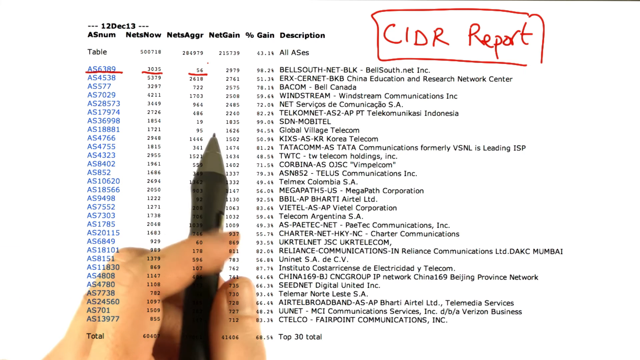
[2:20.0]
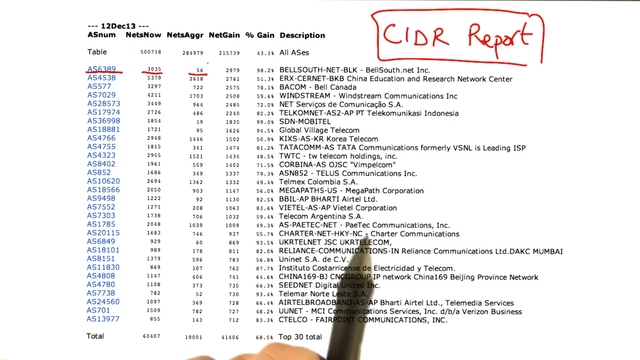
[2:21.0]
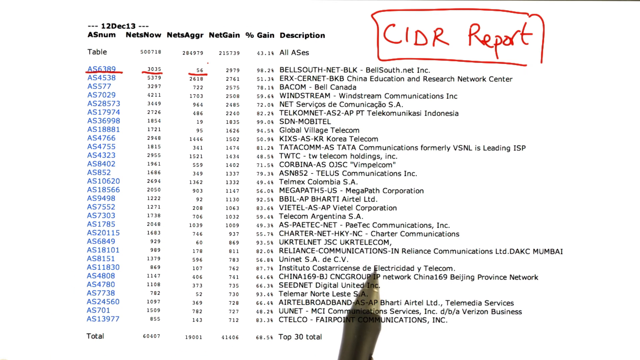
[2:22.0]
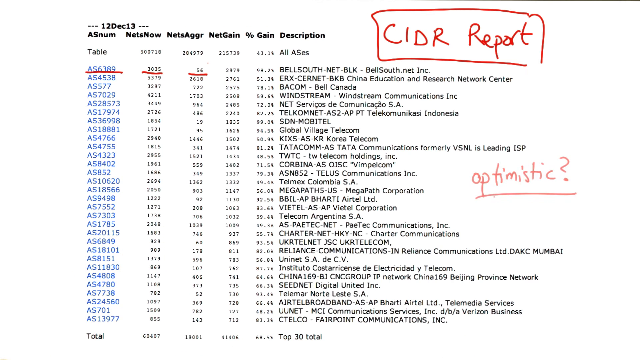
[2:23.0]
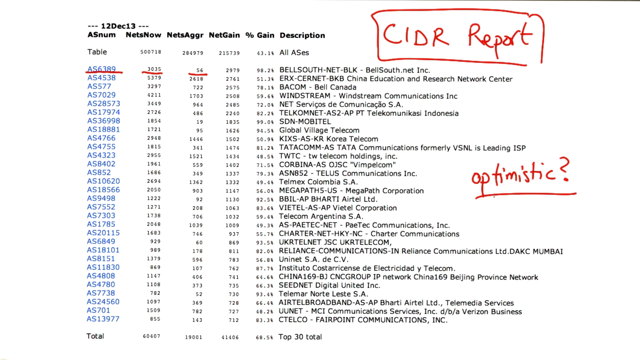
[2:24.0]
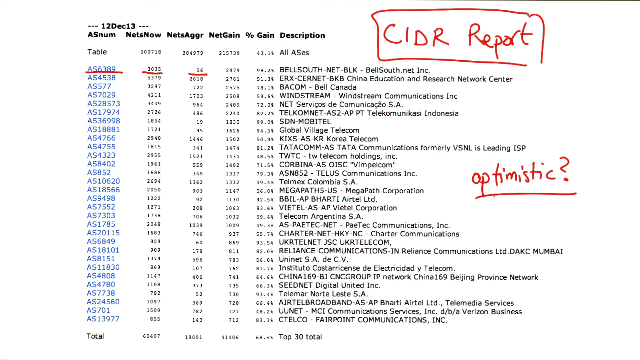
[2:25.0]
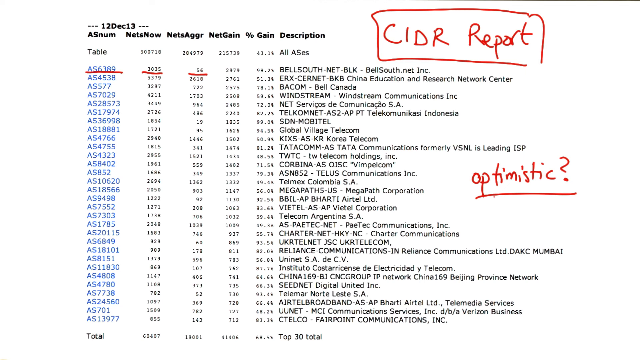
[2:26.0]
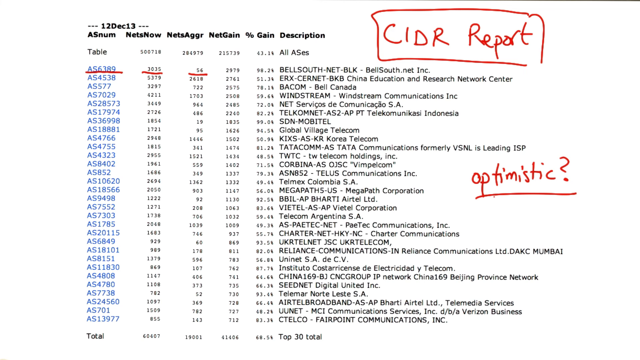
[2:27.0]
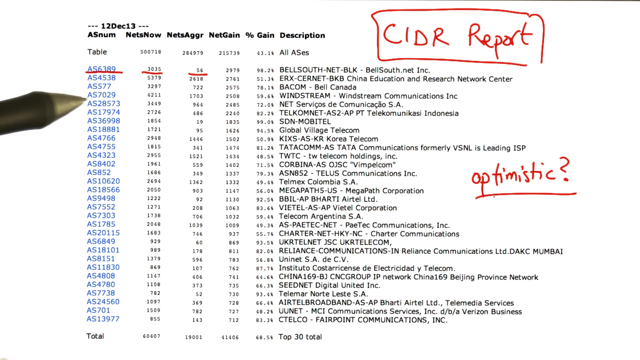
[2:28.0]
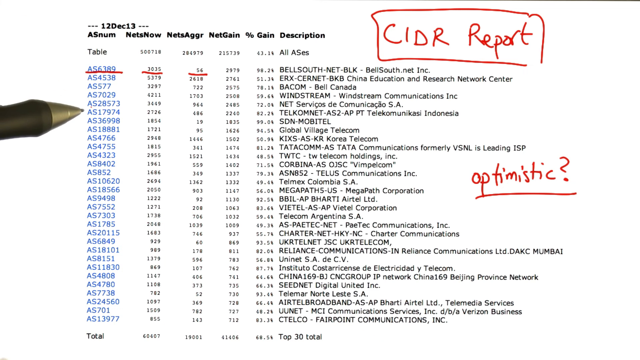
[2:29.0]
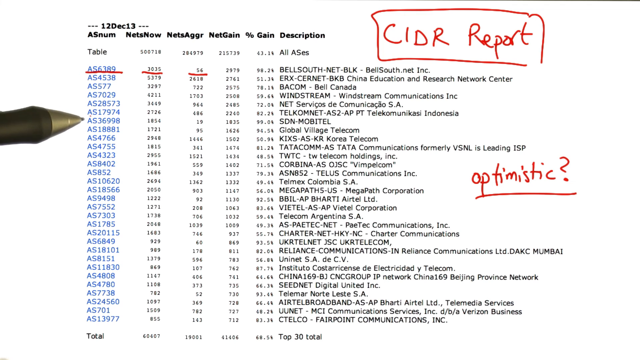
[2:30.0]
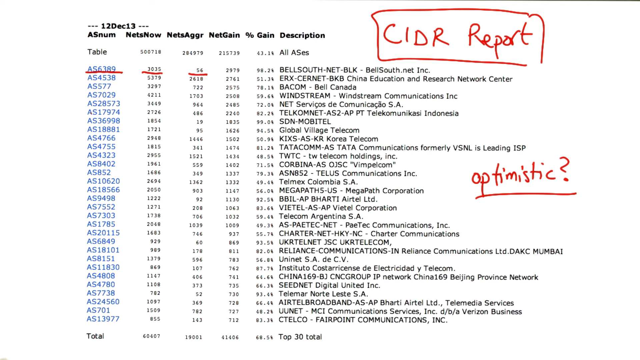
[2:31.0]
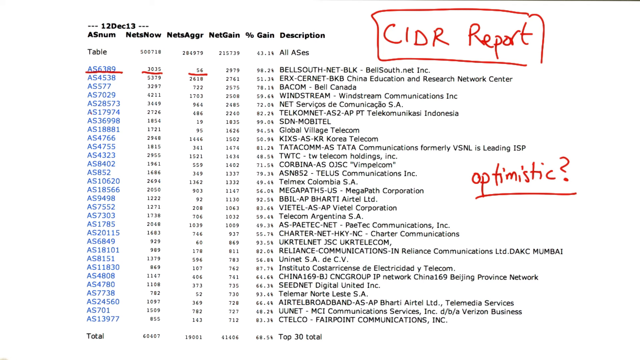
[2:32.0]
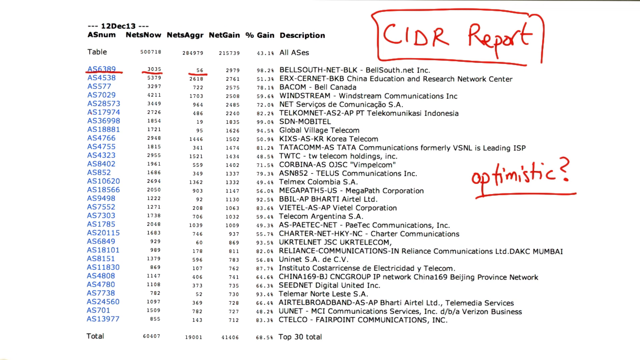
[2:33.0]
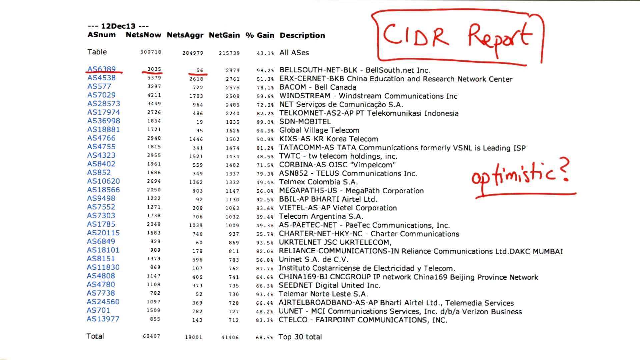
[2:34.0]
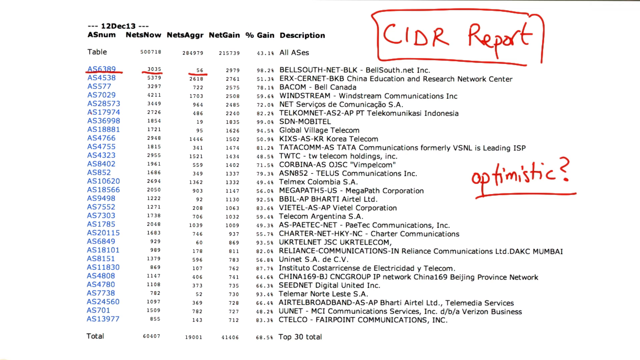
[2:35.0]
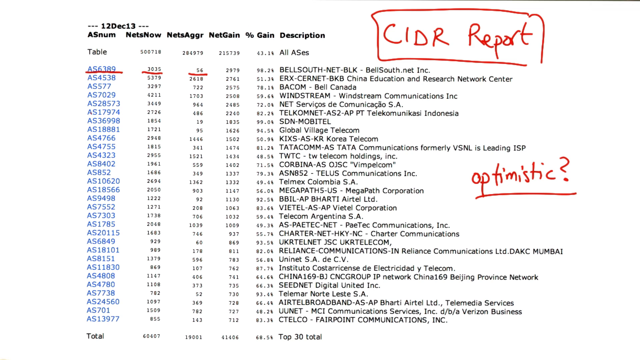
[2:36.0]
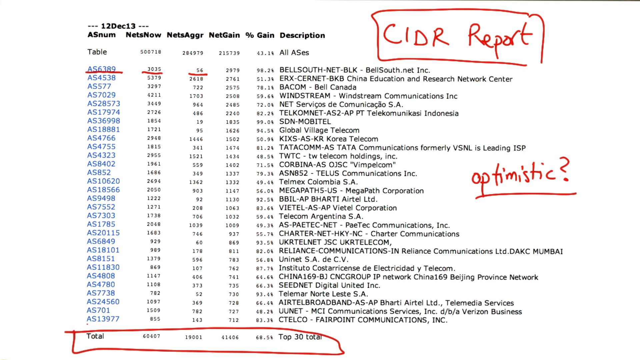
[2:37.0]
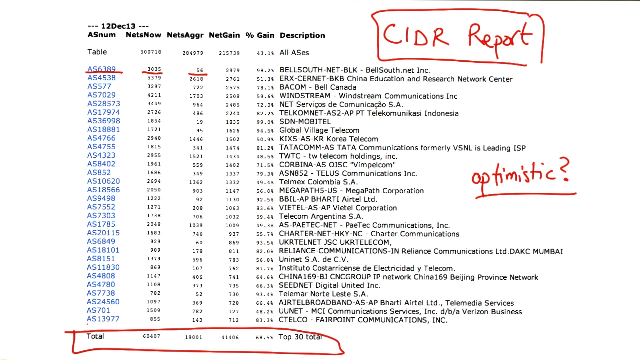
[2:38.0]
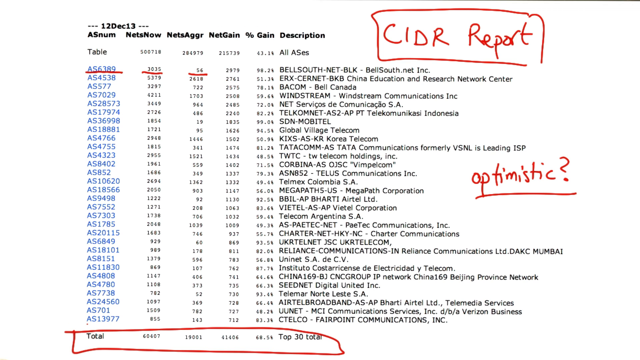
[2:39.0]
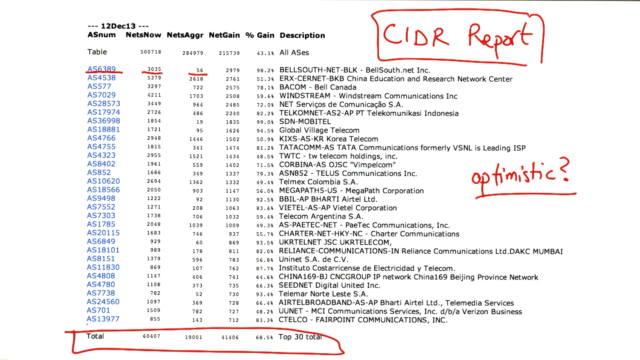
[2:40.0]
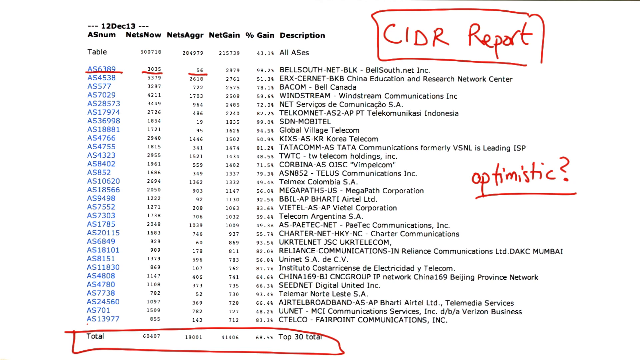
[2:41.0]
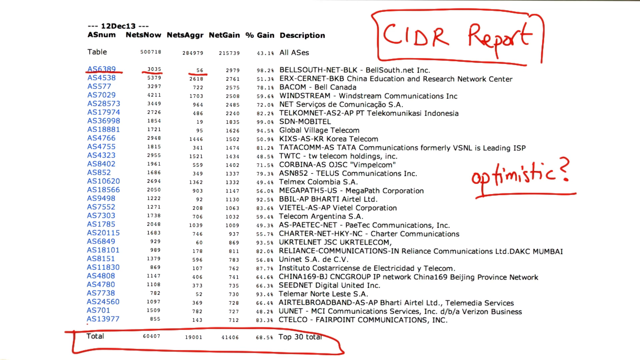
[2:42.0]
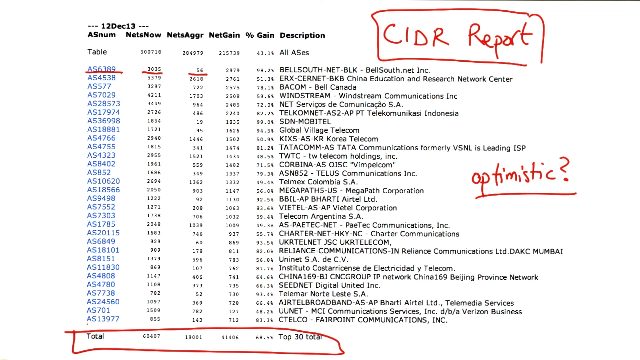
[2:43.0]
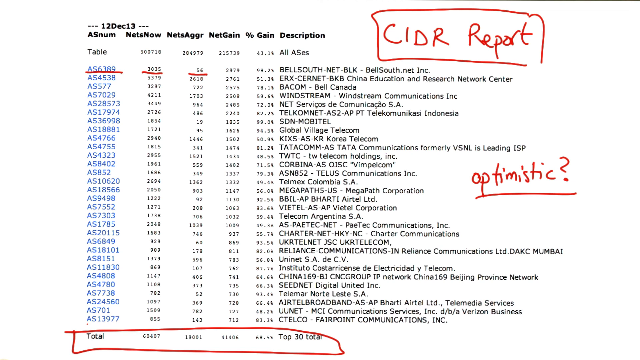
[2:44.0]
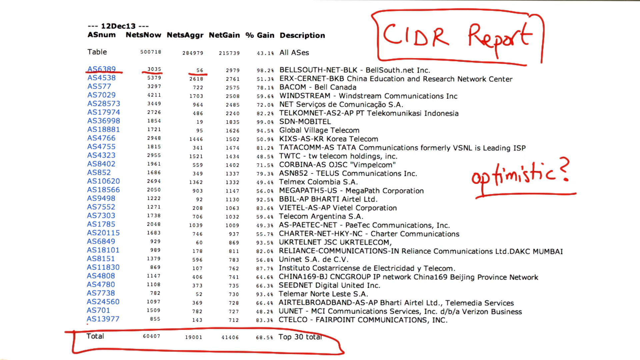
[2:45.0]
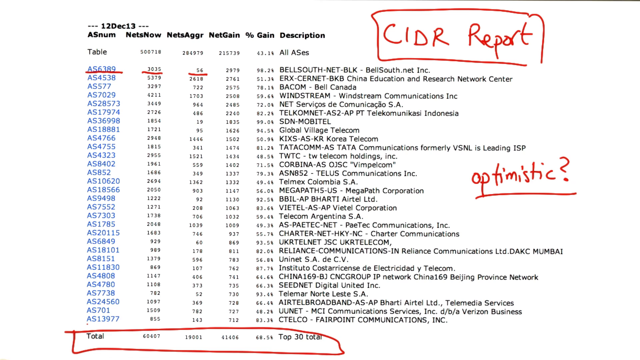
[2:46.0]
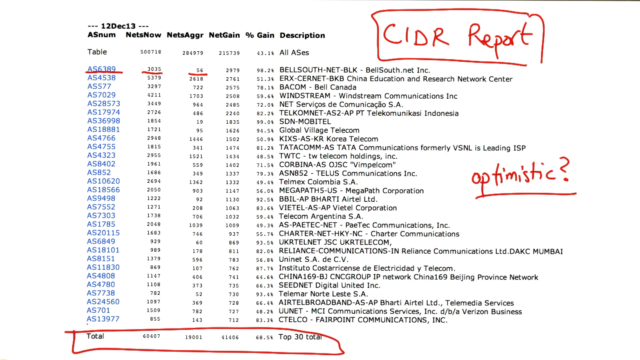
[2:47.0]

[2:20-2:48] The white background shows "12, December, 13" in the top left with the column names underneath. In the first row, the first three columns are underlined. The pen points at them and moves down toward the bottom, then off to the right about midway down, where "optimistic?" is written and underlined in red ink. The pen goes back up on the left side, points at a couple of entries, and goes off the left side of the screen again. It then draws a rectangle around the total, extending all the way to the right column. Under "12 December 13" in the top left are the columns "AS NUM," "NETS NOW," "NETS AGGR," "NET GAIN," "PERCENTAGE GAIN" and "DESCRIPTION," all in bold black lettering. The rest is regular black, except the left column below, which is blue.